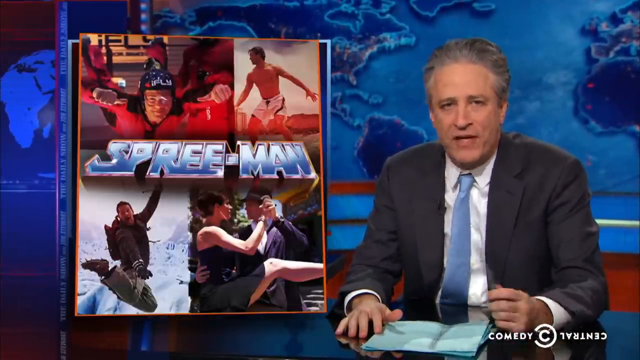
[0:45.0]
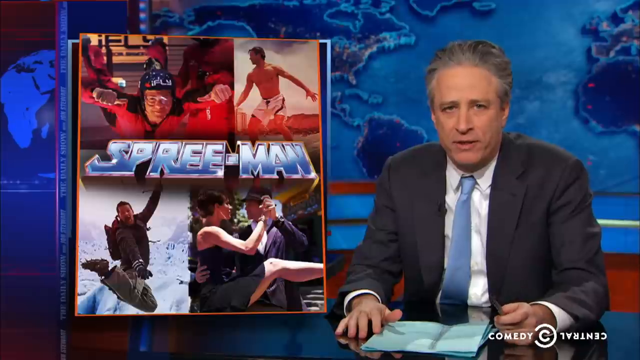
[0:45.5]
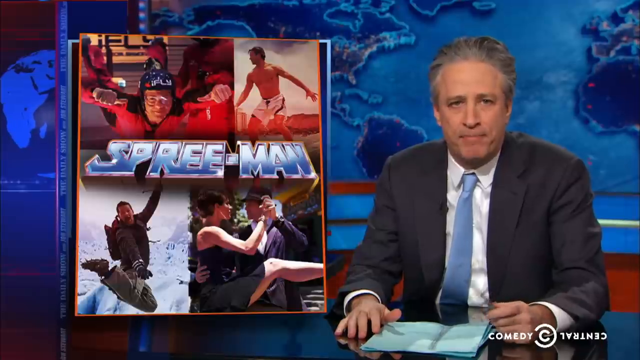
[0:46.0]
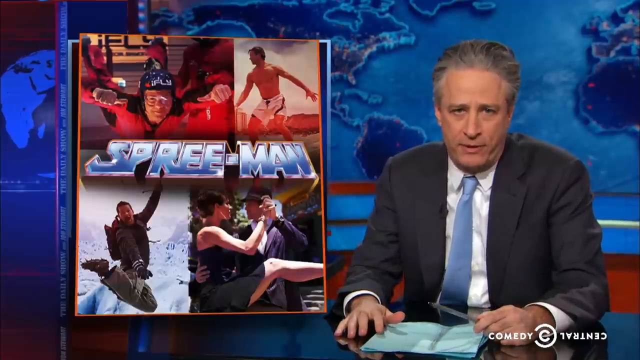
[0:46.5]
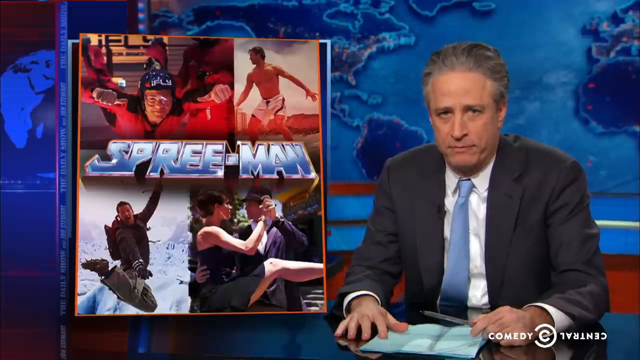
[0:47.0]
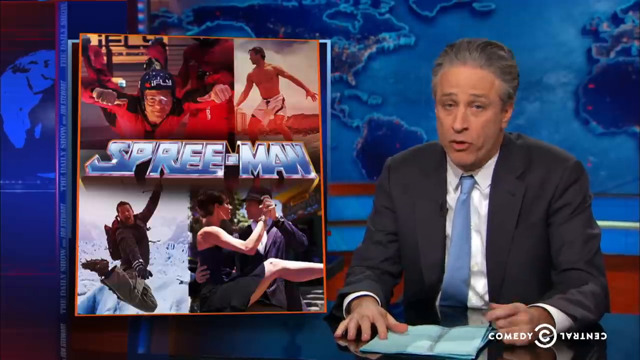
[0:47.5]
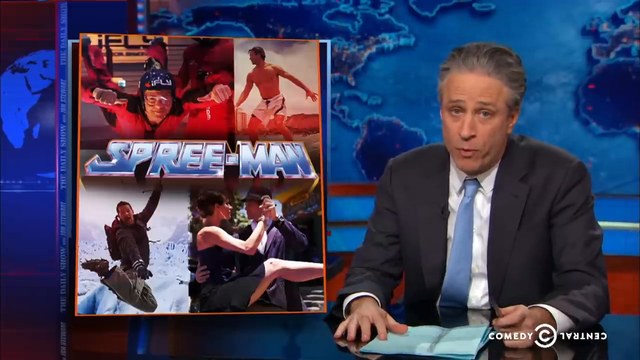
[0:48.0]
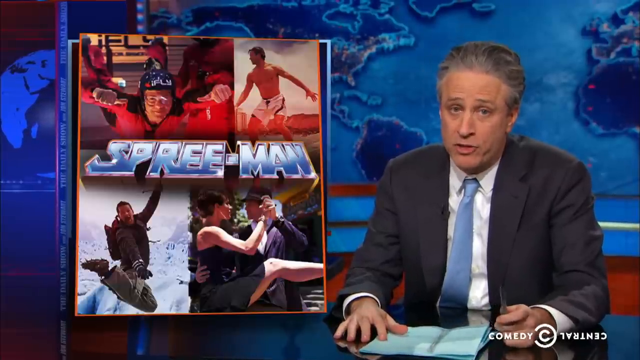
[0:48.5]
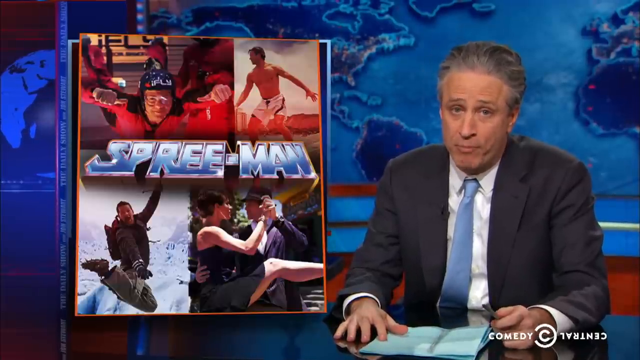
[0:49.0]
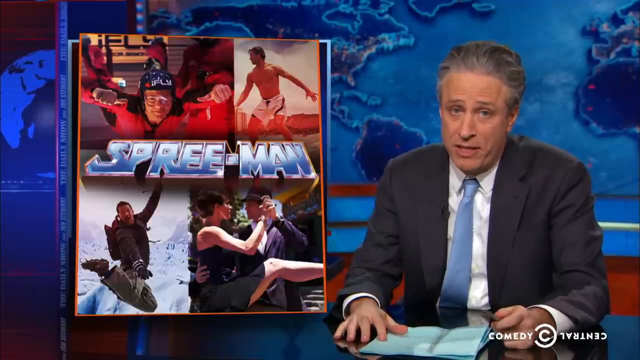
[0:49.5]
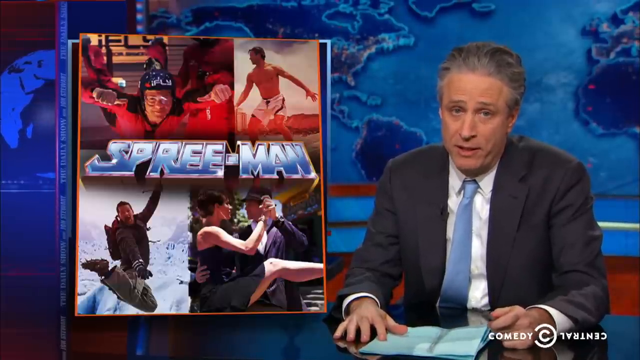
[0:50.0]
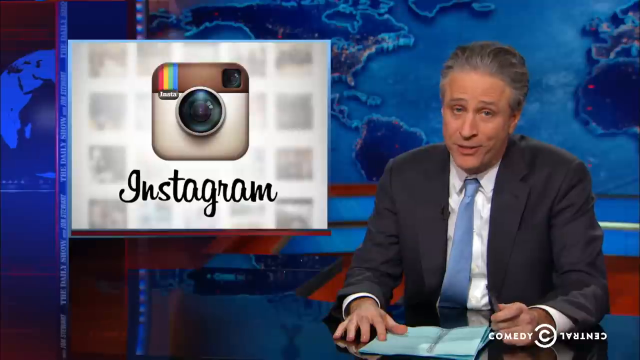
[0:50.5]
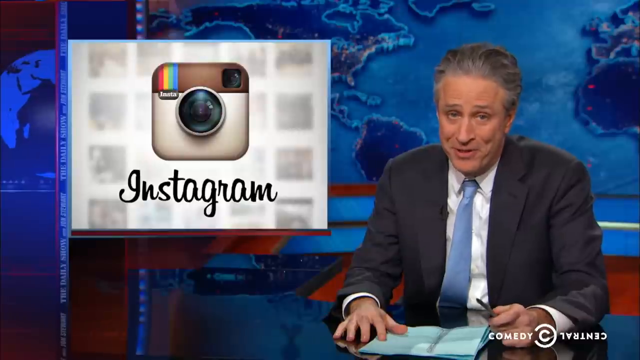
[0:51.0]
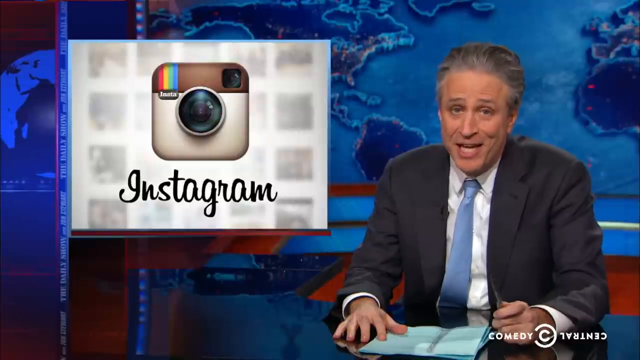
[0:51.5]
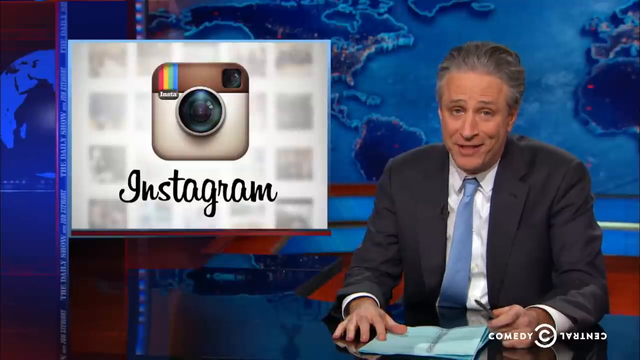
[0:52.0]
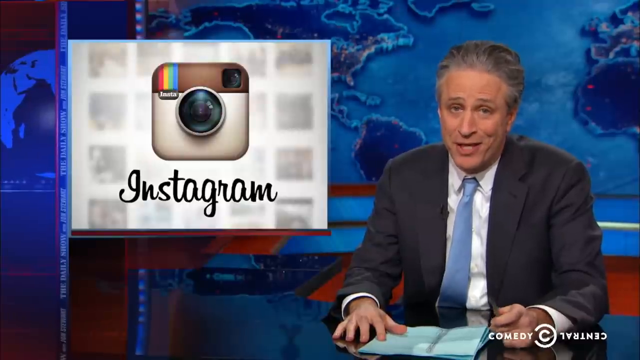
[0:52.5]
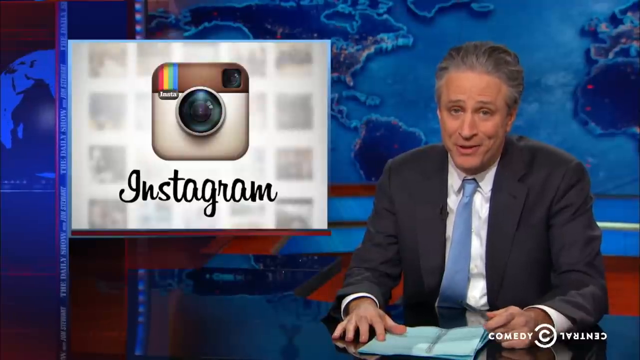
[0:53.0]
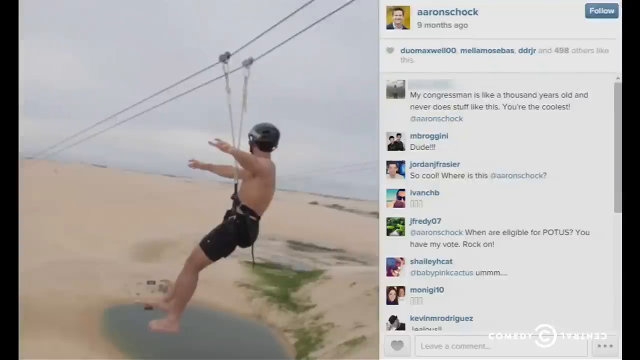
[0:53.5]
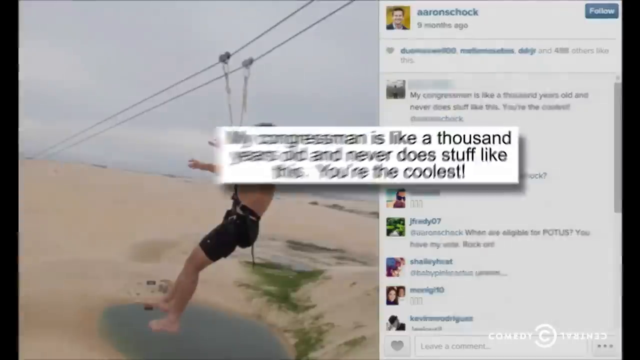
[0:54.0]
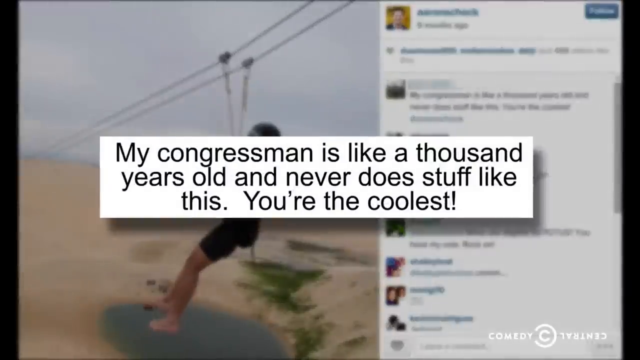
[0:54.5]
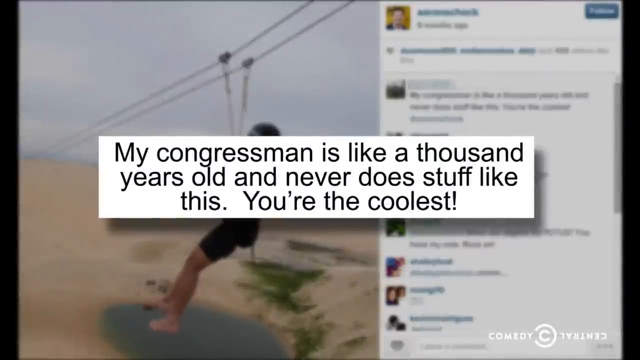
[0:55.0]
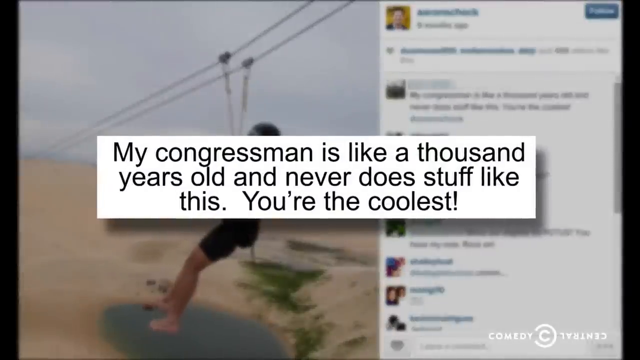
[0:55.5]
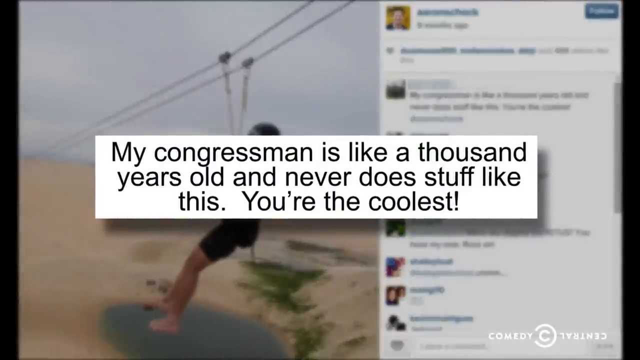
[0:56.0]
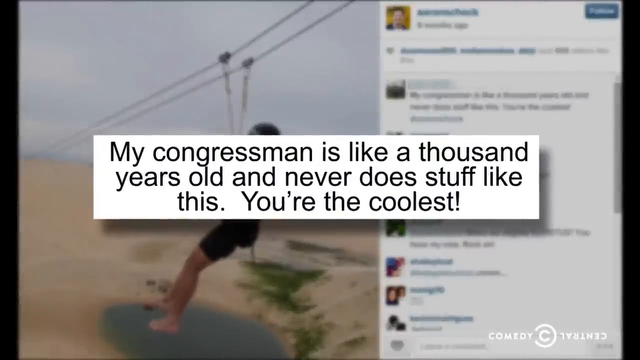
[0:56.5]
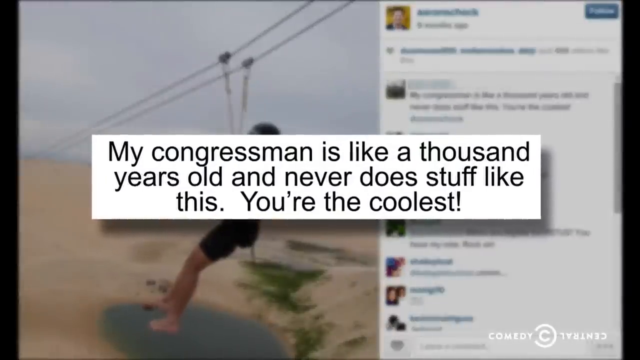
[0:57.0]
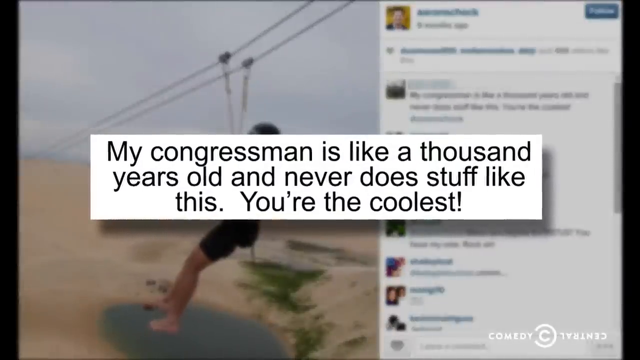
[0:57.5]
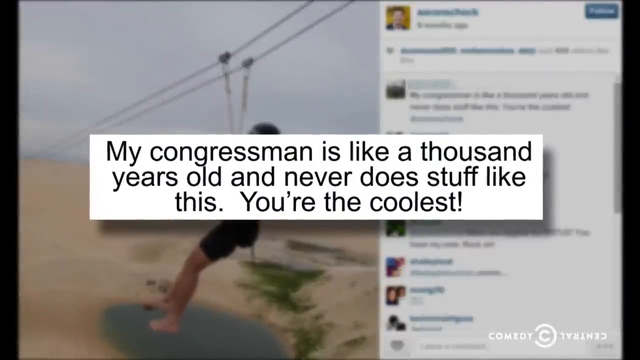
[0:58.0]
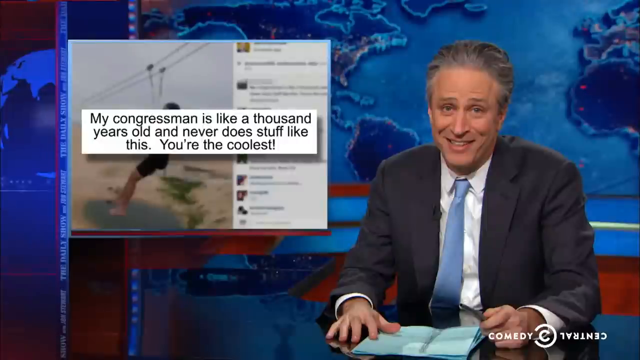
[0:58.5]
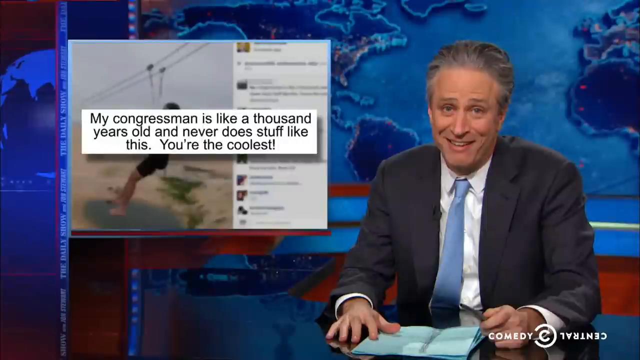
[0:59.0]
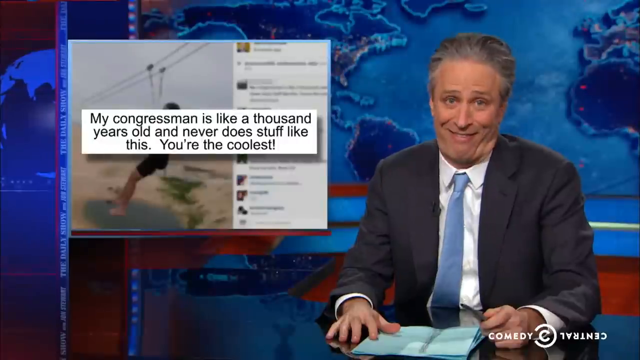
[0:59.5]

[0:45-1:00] A graphic in a hero-style font says "Spree Man" alongside images of Aaron Schock on vacation, while Jon Stewart talks on the right. The graphic on the left then changes to the Instagram logo, apparently where the images were posted. One of the comments says "my congressman is like a thousand years old and never does stuff like this, you're the coolest." Jon Stewart apparently makes an incredulous face in response.